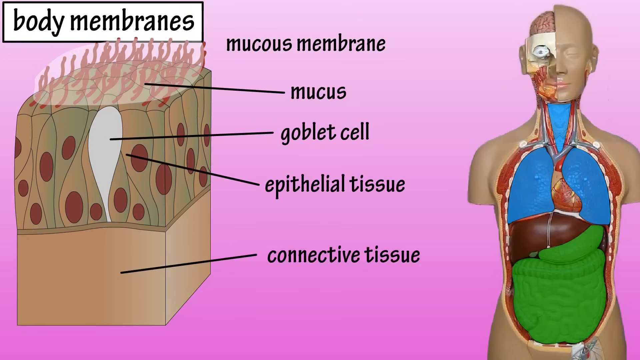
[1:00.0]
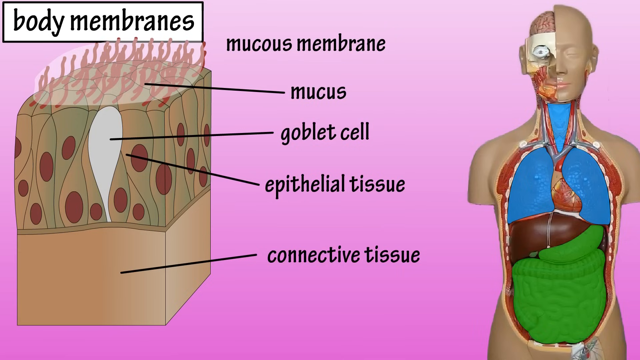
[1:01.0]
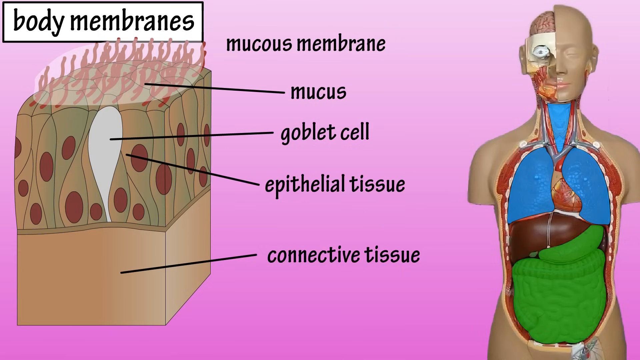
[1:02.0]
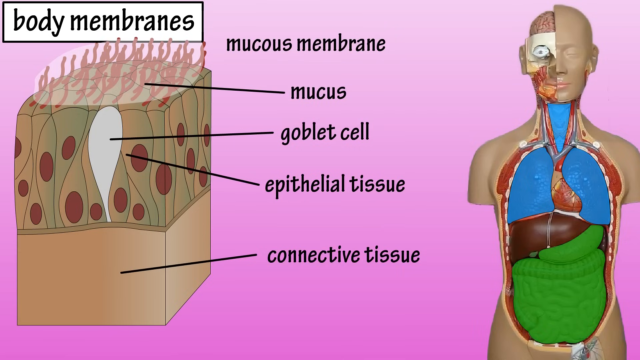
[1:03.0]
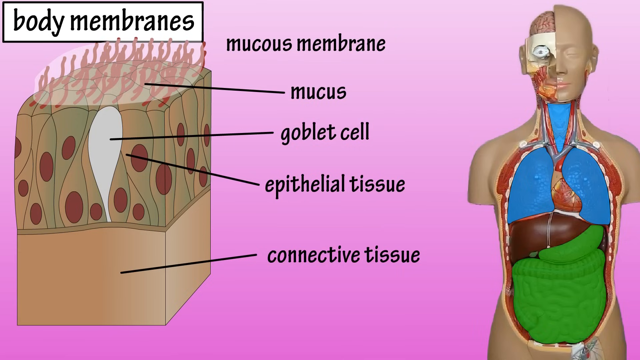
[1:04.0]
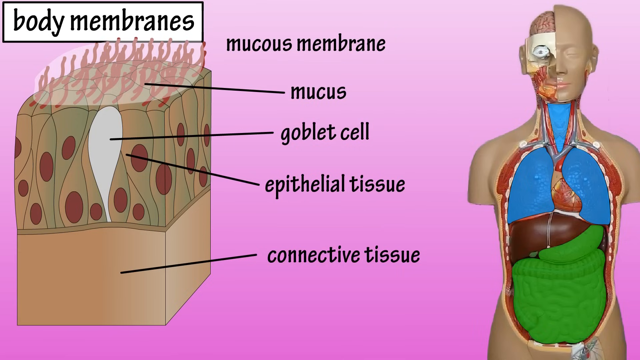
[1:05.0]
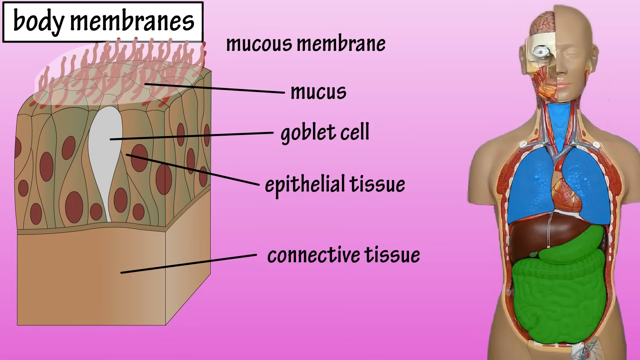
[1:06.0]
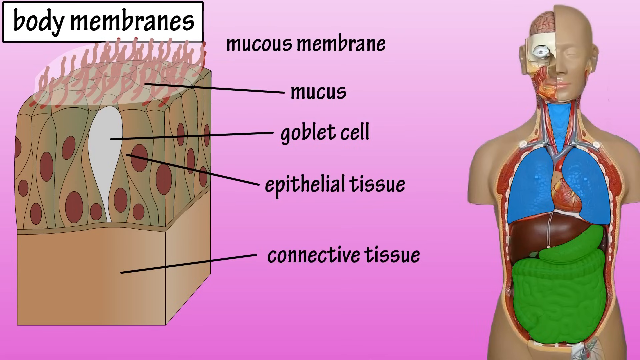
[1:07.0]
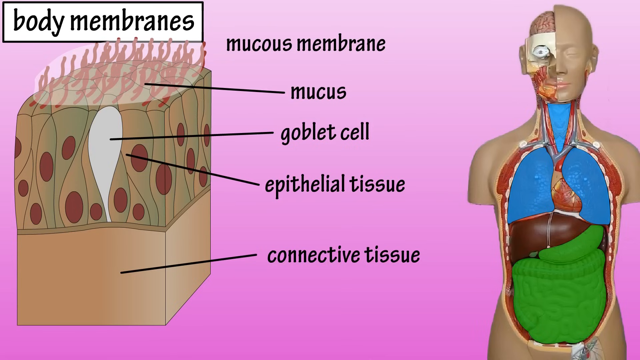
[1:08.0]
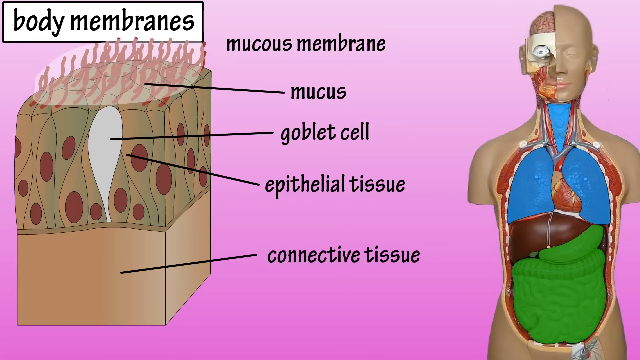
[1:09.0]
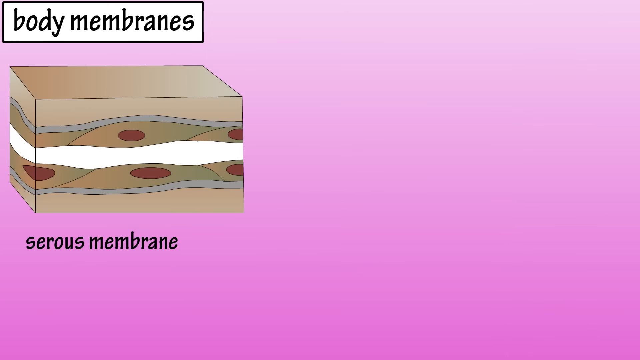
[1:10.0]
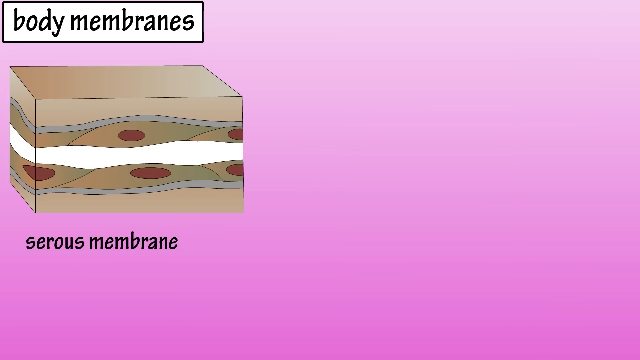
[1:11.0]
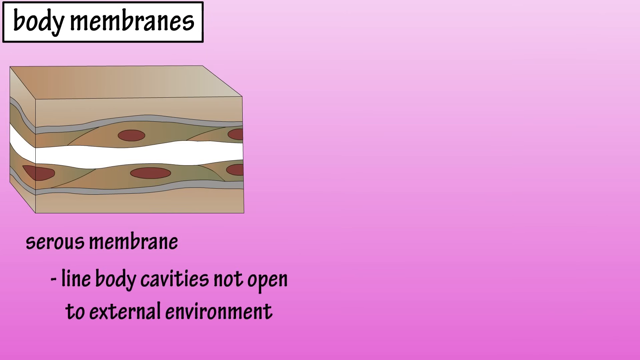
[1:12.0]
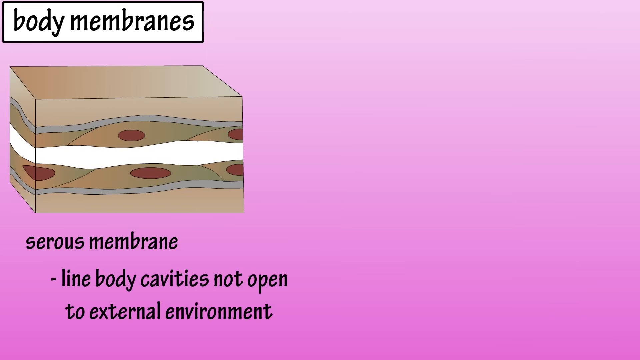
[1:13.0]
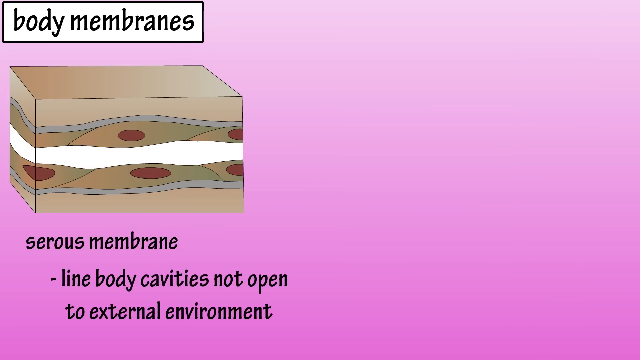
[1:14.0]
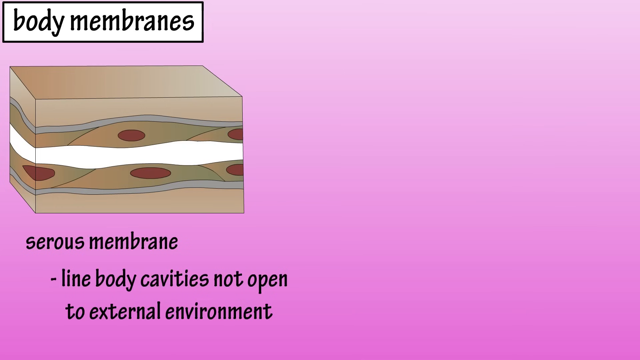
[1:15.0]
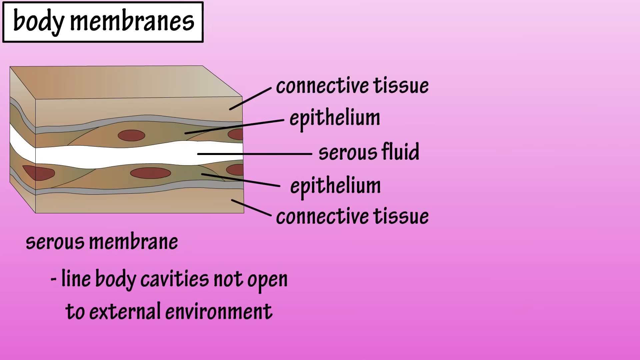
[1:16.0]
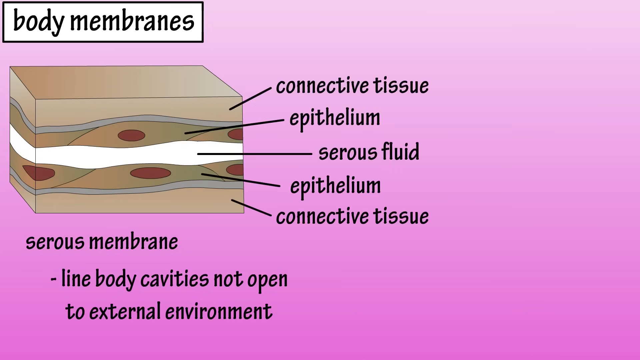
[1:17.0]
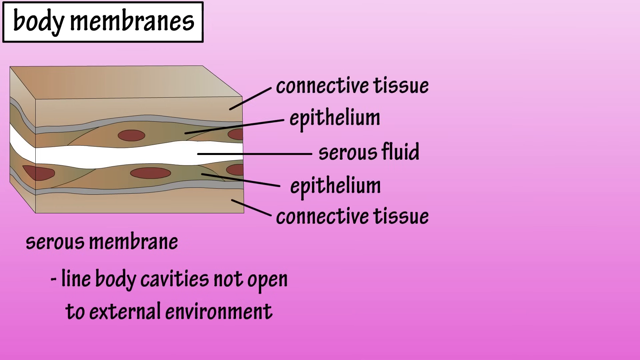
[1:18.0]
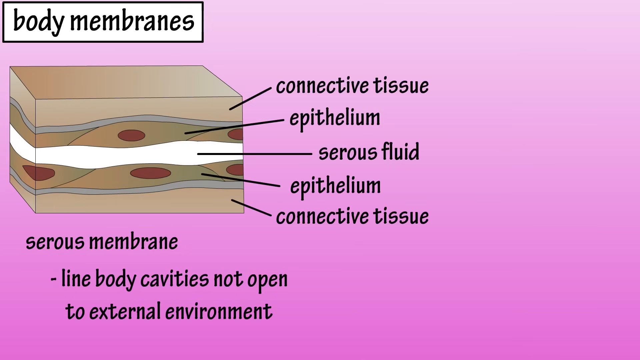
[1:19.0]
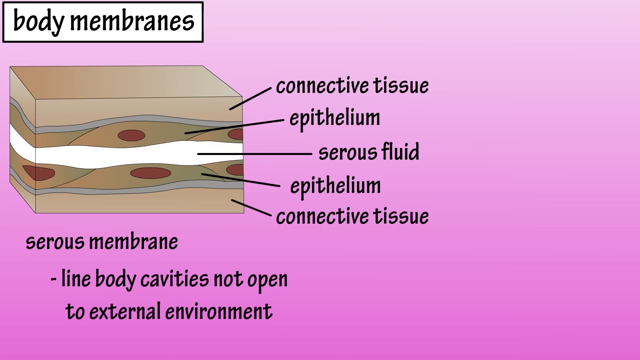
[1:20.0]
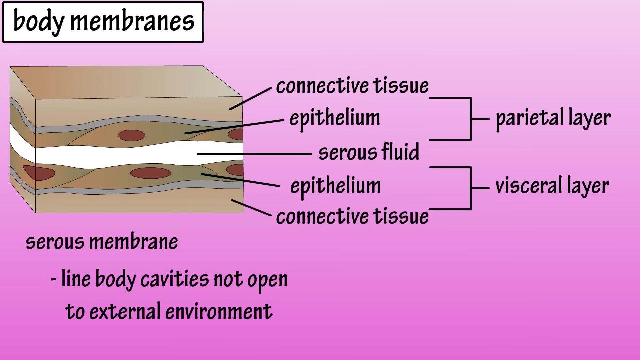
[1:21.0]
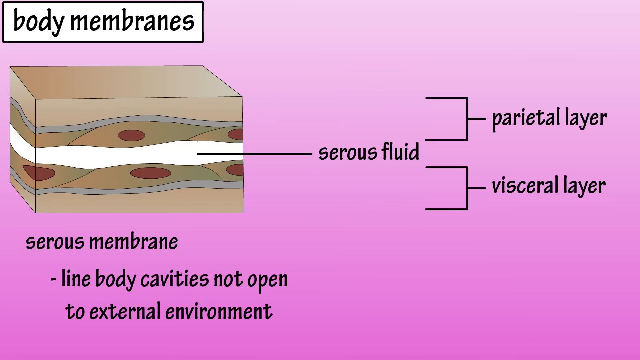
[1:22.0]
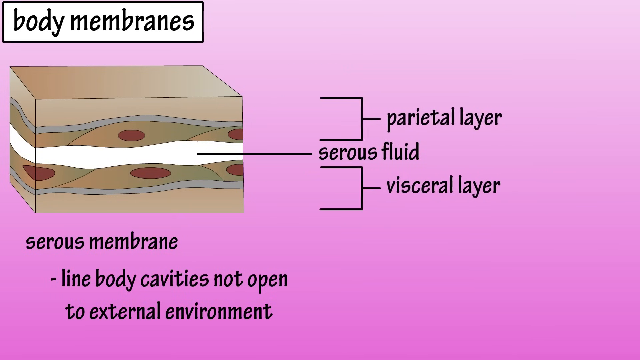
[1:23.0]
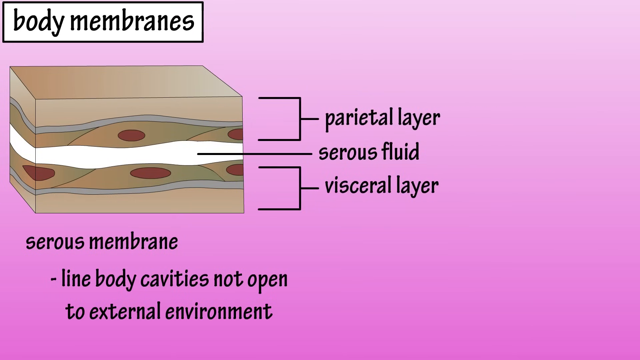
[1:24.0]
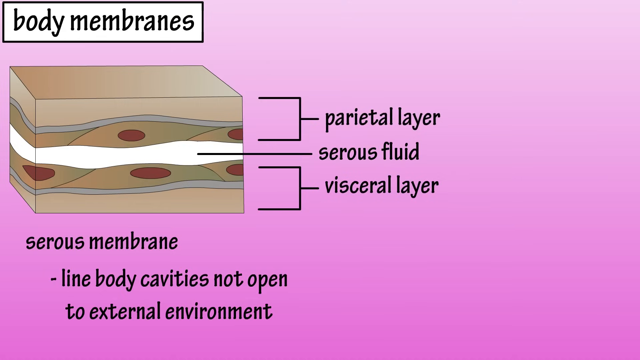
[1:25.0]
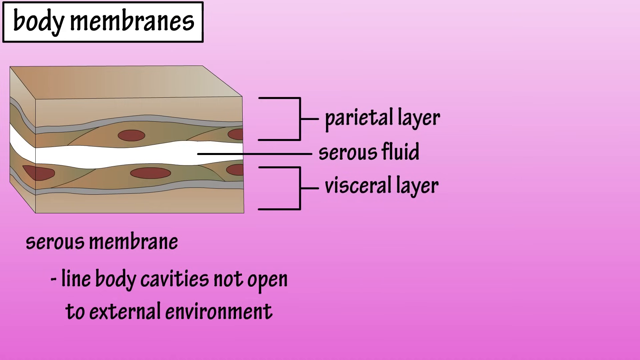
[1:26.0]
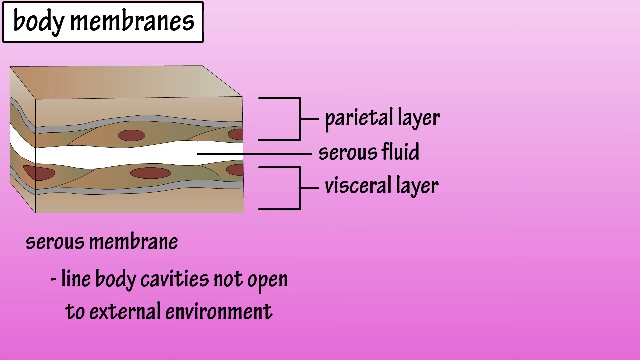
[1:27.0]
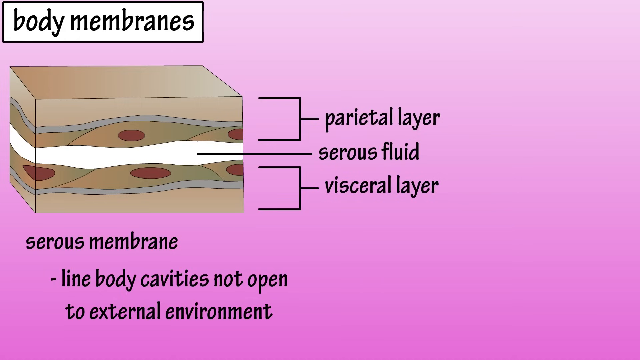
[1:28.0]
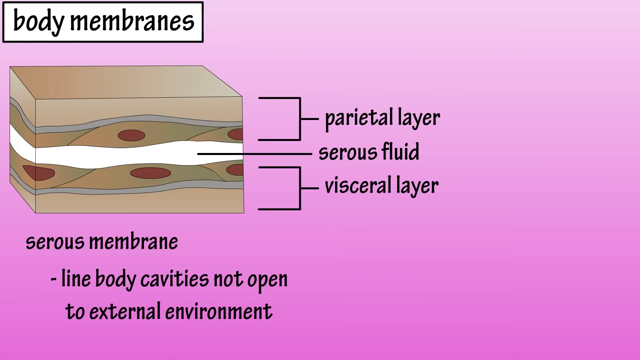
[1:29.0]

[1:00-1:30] All text and images are removed from the screen except the title in the top left corner, and the cross-section image of the serous membrane appears with its subtext. Underneath the heading below the picture, a bullet point reads "lines body cavities not open to external environment". To the right of the image, five lines appear with label text reading, from top to bottom, "connective tissue", "epithelium", "serous fluid", "epithelium" and "connective tissue". Two brackets then appear to the right of these labels, marking the "parietal layer" and the "visceral layer" from top to bottom. The text for the four lines above and below "serous fluid" disappears and is replaced by the parietal layer and visceral layer brackets, which fade from right to left, moving closer to the serous membrane image on the left side of the screen. The right side of the screen shows the same pink gradient background, unchanged from the start of the video.